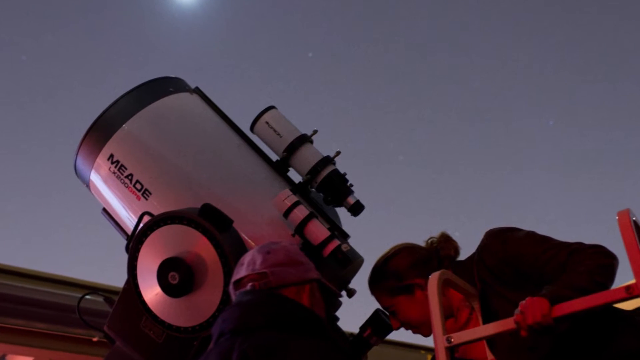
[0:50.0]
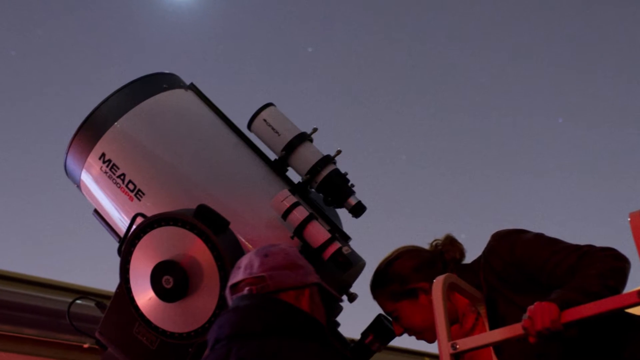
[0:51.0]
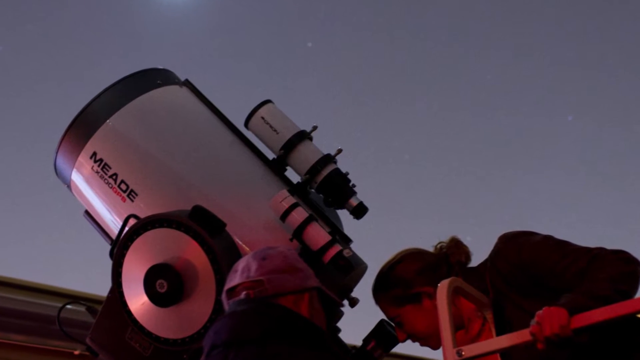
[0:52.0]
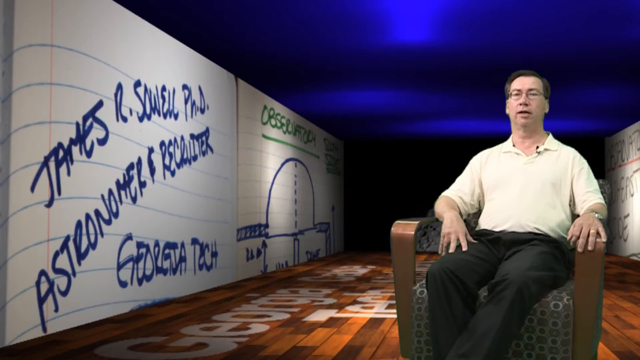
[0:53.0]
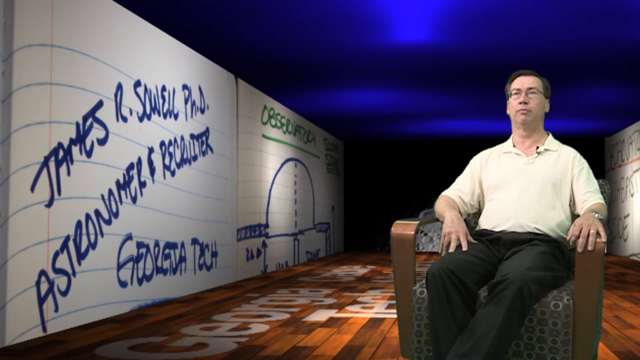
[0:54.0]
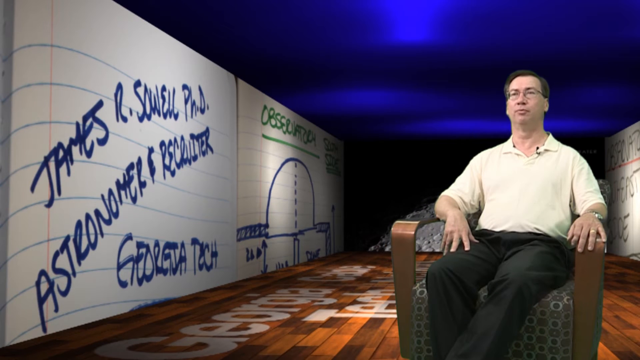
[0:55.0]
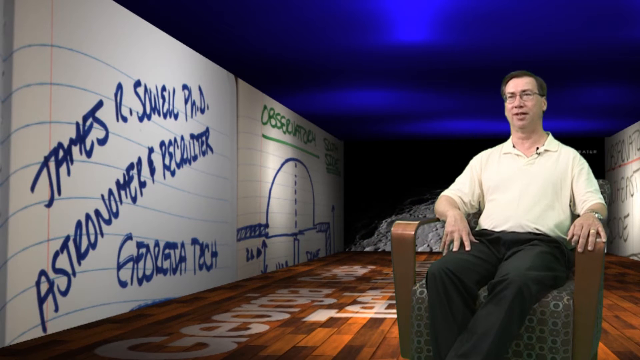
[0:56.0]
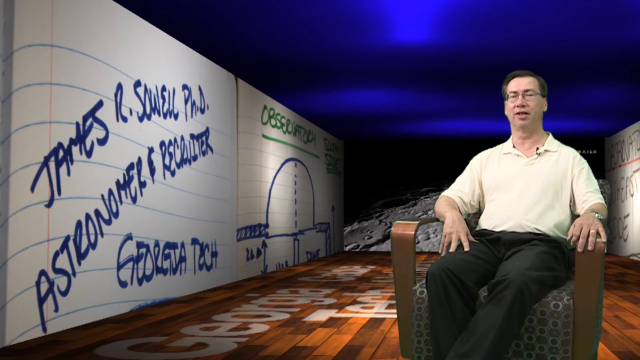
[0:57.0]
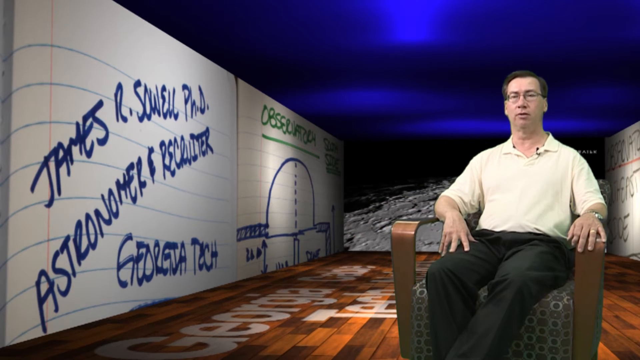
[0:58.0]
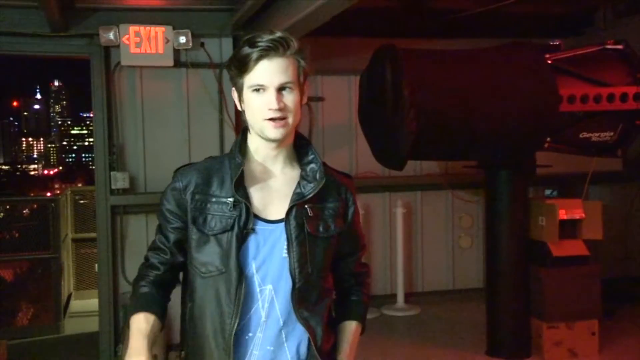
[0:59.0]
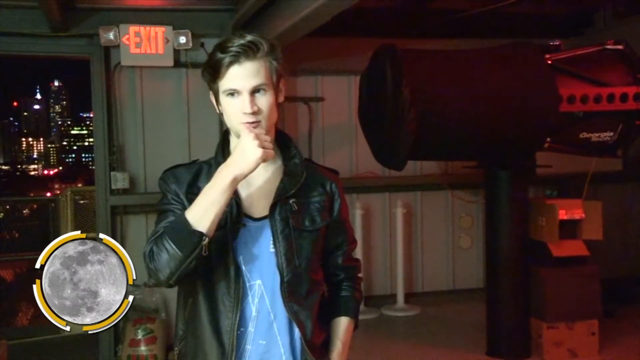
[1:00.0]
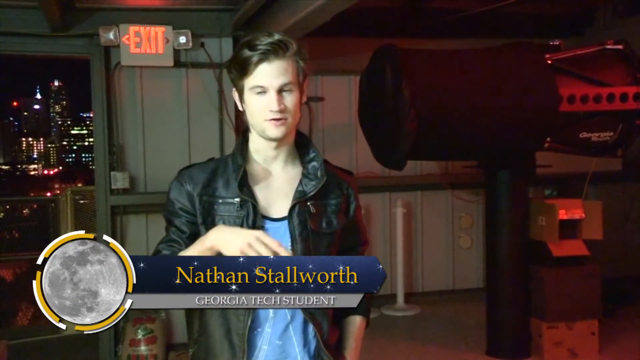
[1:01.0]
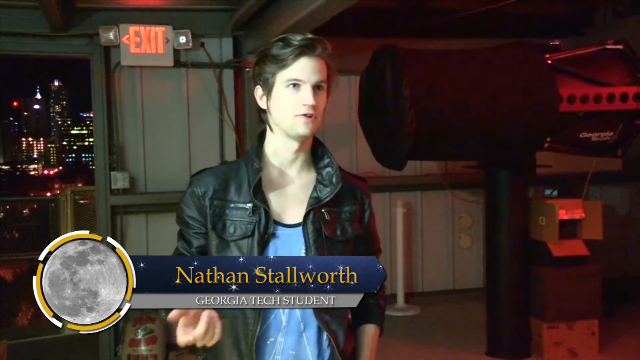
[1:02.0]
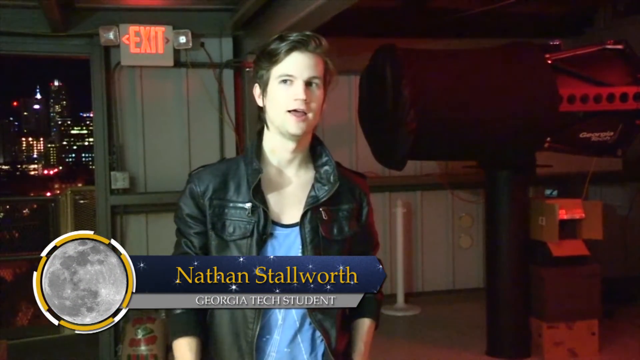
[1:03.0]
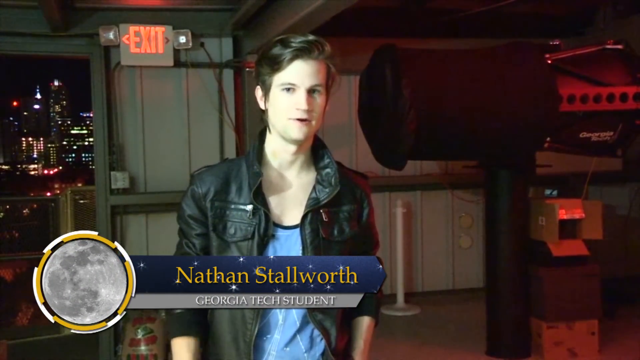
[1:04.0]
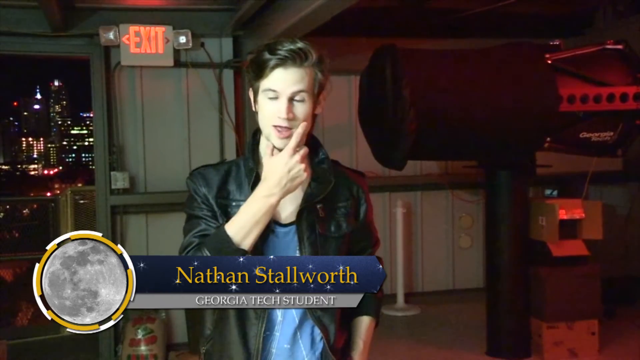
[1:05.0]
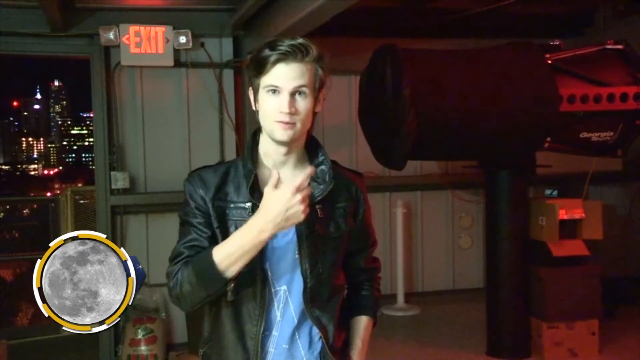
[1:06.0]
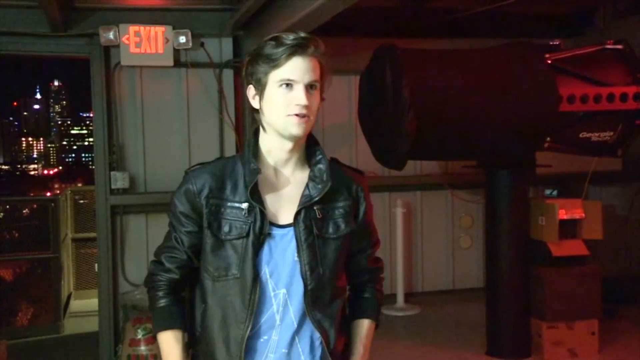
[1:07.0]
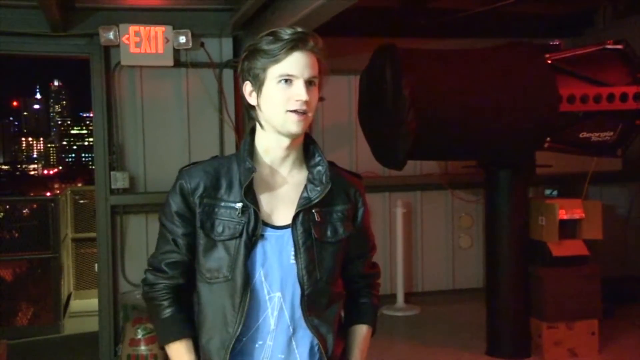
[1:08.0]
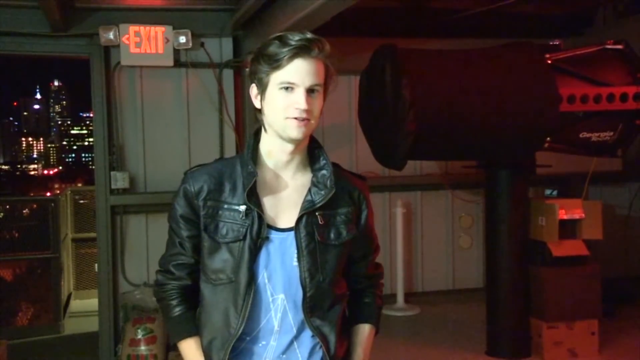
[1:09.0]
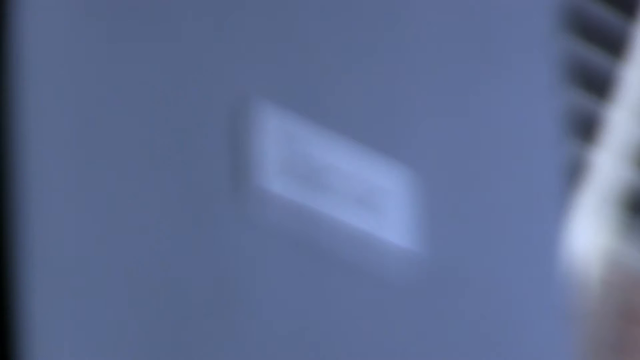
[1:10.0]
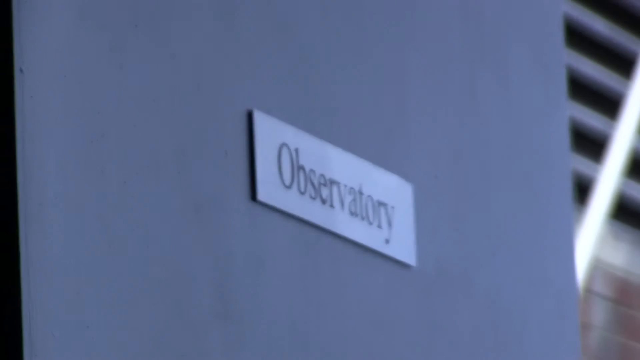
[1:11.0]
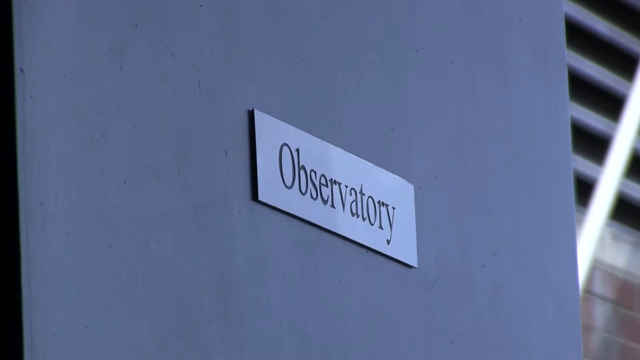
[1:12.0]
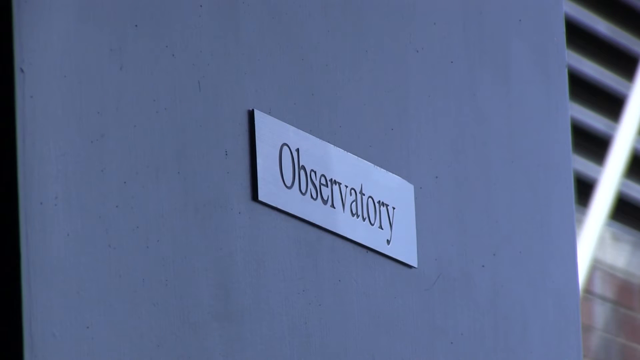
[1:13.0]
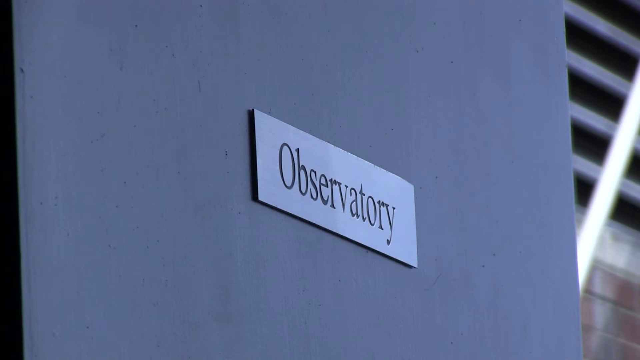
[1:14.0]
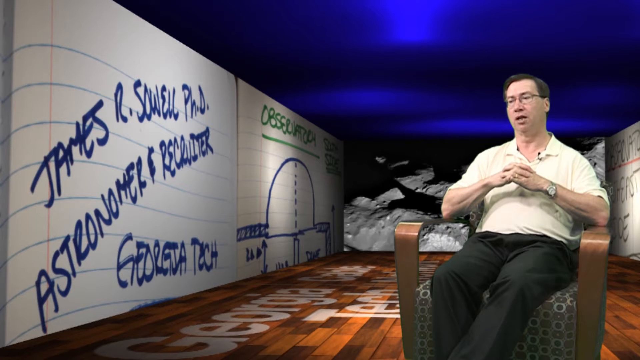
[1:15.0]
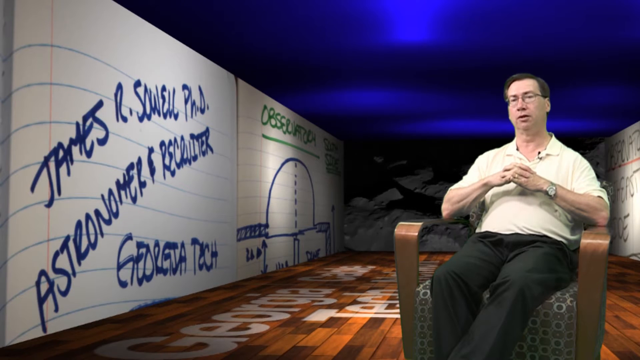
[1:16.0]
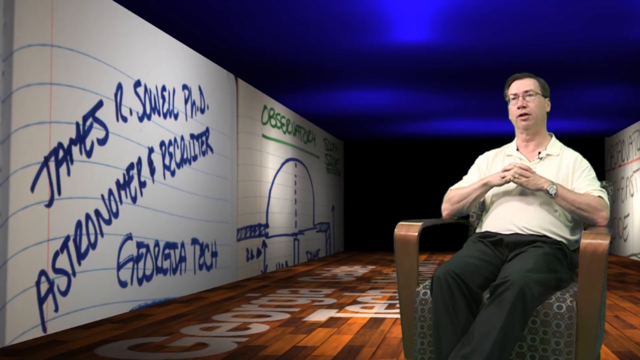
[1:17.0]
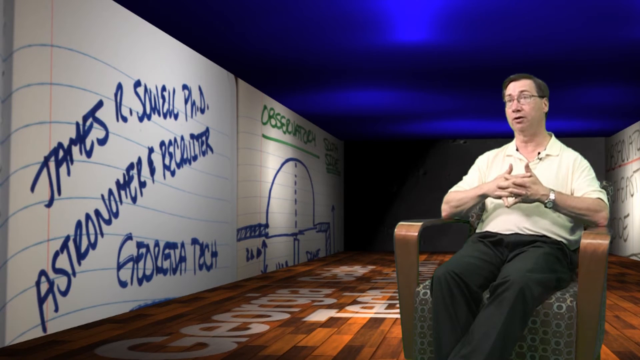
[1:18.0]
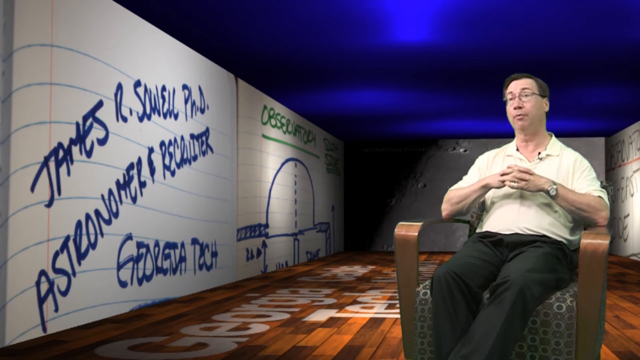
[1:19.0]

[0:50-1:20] The shot zooms in on the large telescope. Then a different scene shows a ceiling that seems to be in varying shades of blue, lighter and darker. A man sits in a wood and fabric chair; he wears black pants, a white dress shirt and glasses, and has medium brown hair parted on the left-hand side. The carpet on the floor seems to say "Georgia", with the word on the other side of it not visible enough to read, and "tech" under those two words. A somewhat curved wall board looks like notebook paper; in blue ink it says "James R.", followed by what looks like it could be "Sowell", then "PhD, astronomer", and possibly "recruiter", though the word trails off. Underneath that it says "Georgia Tech". To the right is another sheet of lined notebook paper, a slightly darker shade, with a drawing on it. The man is talking to someone. In the background is a screen of moving clouds, like a scene from above the earth. The scene changes to a young man about 23 or 24 years old with fairly thick, shiny light brown hair parted very far on the left and going to the right. He touches his chin. He wears a black leather jacket with the sleeves somewhat pushed up and zippers on the bottom of the sleeves, over a light blue T-shirt. The room is dark; through a window, lit-up buildings are visible. There is a neon red exit sign with an emergency light on each side of it, and various types of equipment and some boxes are in the room. His name pops up from the same moon graphic on the left, surrounded by golden white: "Nathan Stallworth, Georgia Tech student". He is being interviewed, looking at several different people off camera as he speaks, and smiles a little as he talks. The scene then changes to a gray wall with a sign that says "Observatory", and then back to the man in the wood and fabric chair.